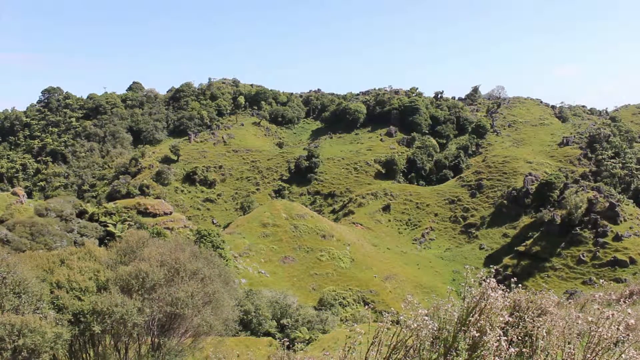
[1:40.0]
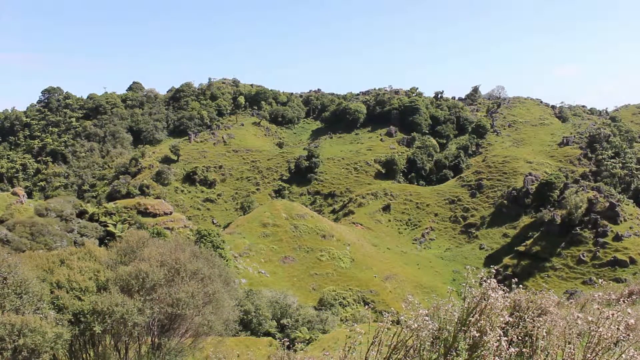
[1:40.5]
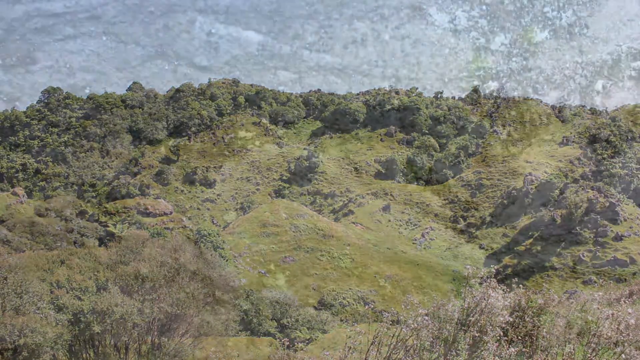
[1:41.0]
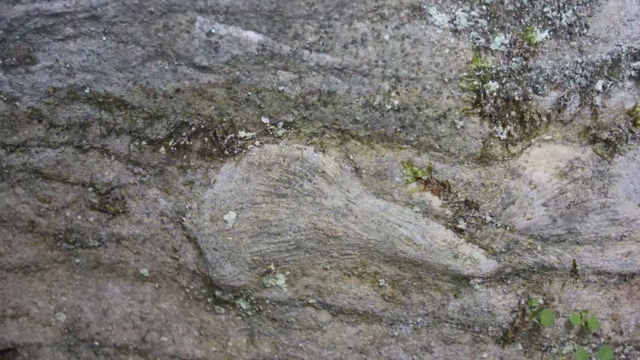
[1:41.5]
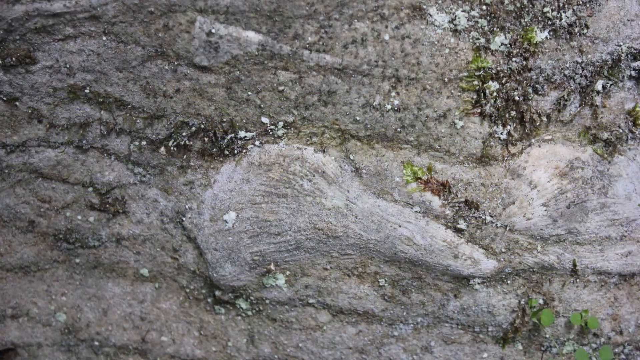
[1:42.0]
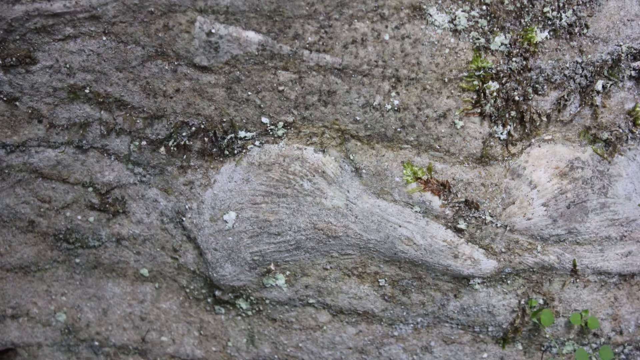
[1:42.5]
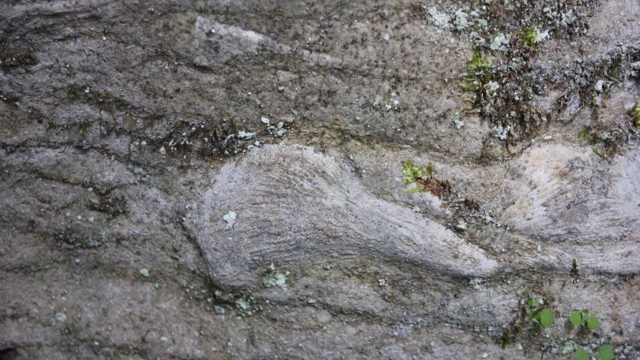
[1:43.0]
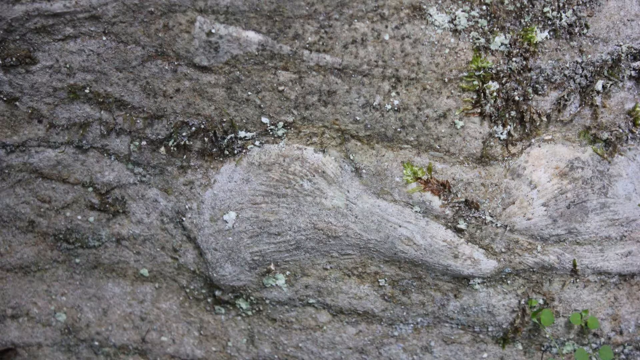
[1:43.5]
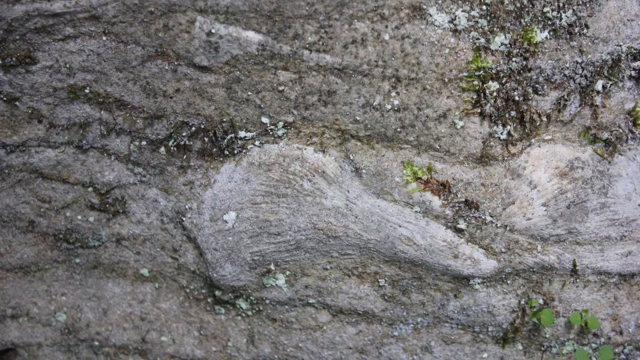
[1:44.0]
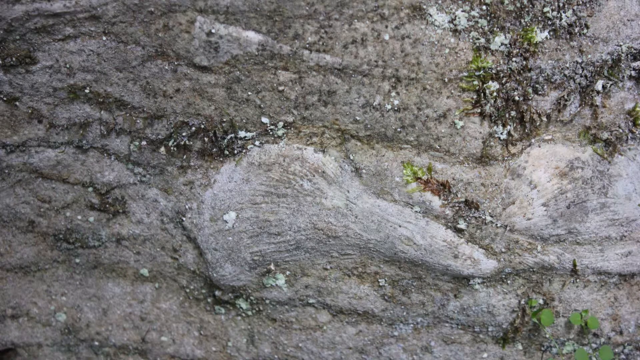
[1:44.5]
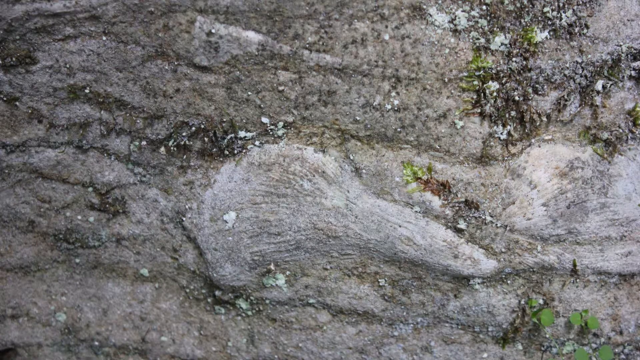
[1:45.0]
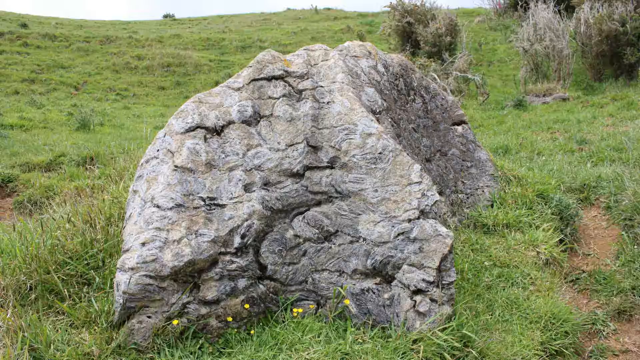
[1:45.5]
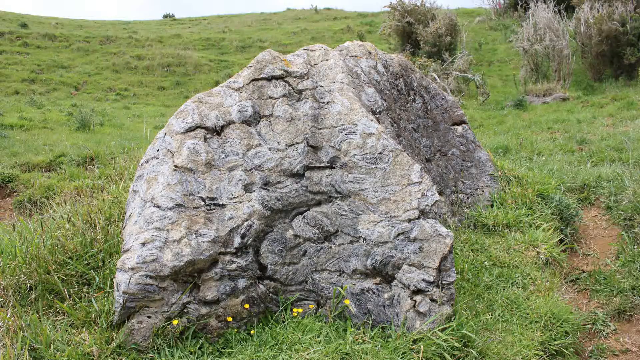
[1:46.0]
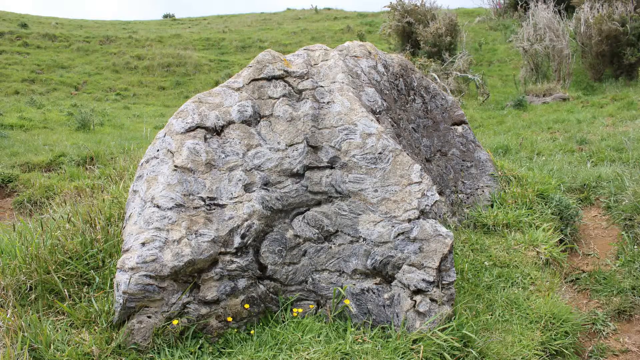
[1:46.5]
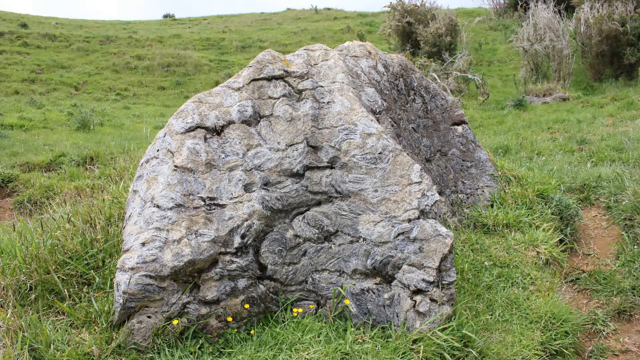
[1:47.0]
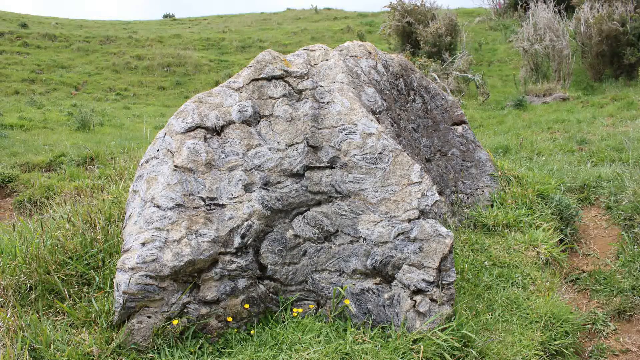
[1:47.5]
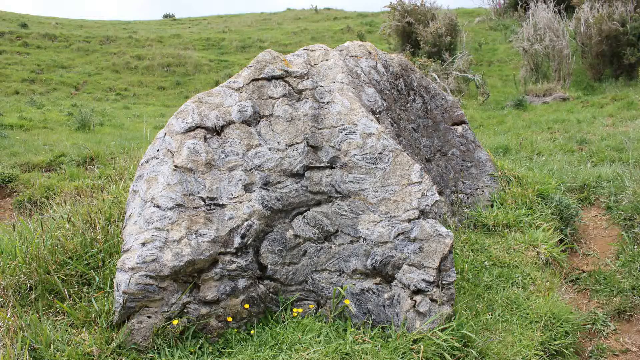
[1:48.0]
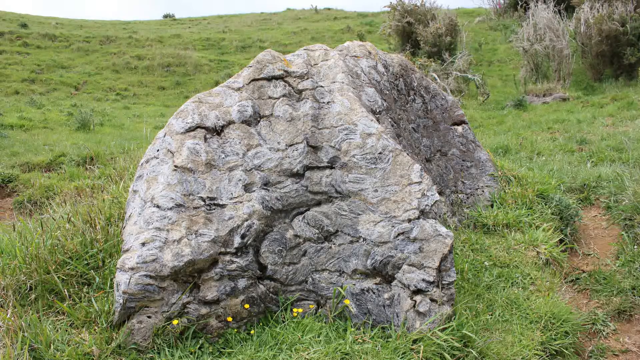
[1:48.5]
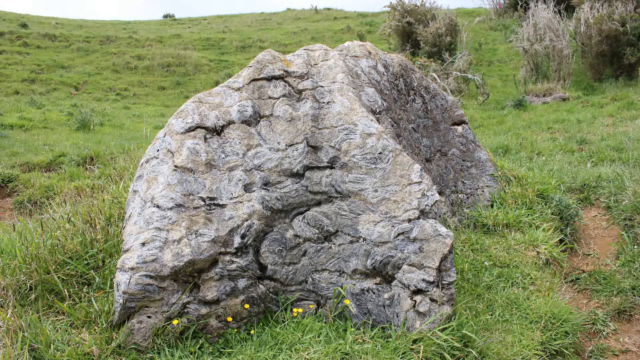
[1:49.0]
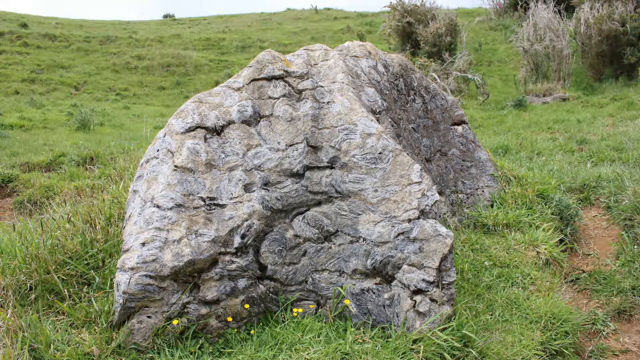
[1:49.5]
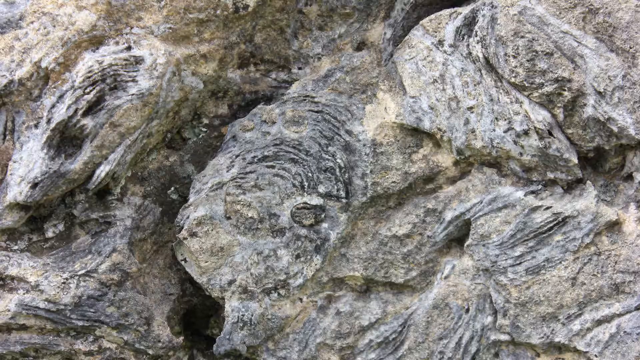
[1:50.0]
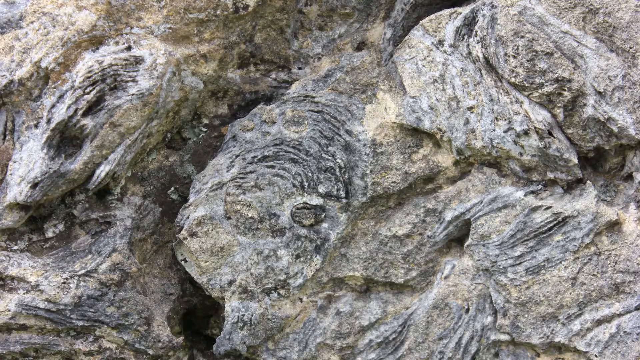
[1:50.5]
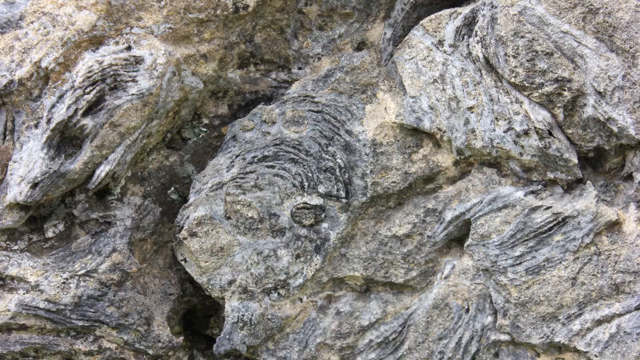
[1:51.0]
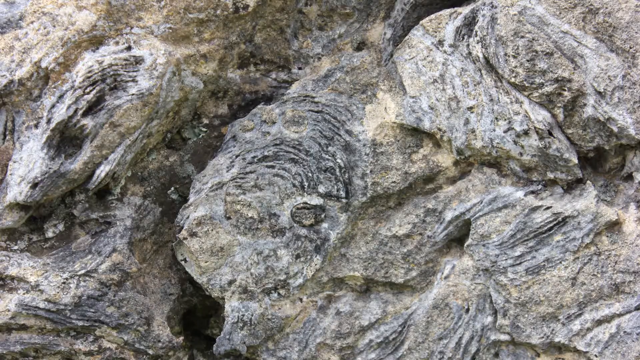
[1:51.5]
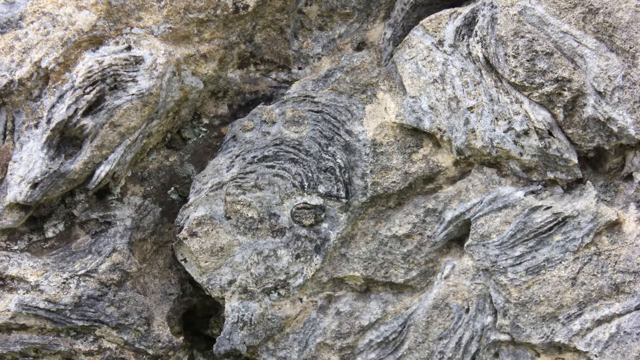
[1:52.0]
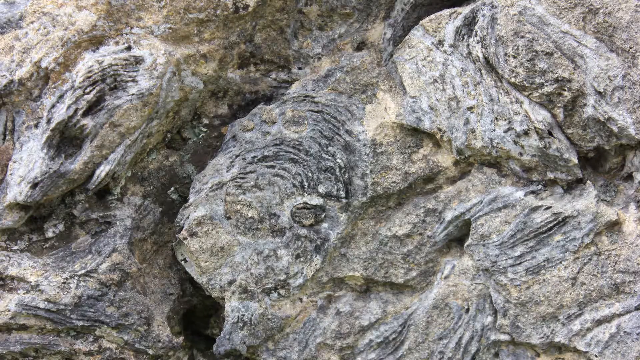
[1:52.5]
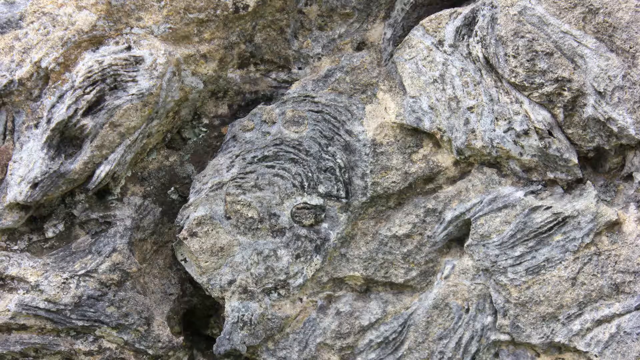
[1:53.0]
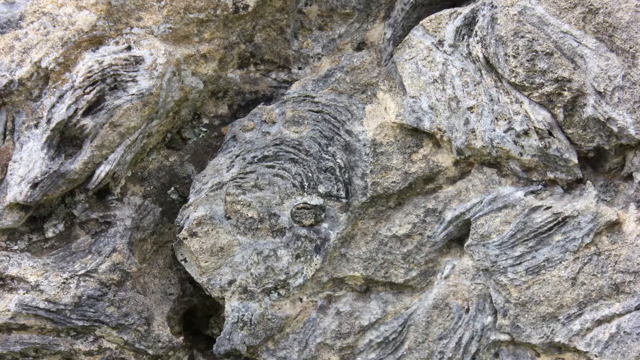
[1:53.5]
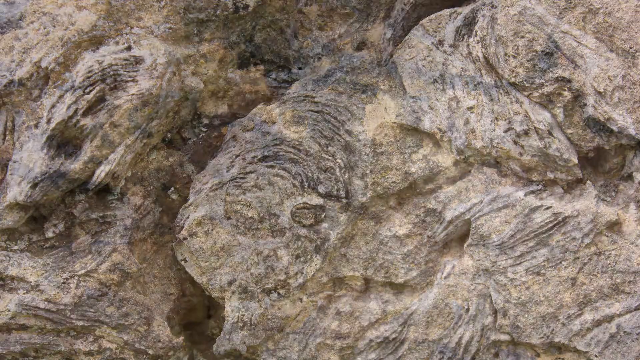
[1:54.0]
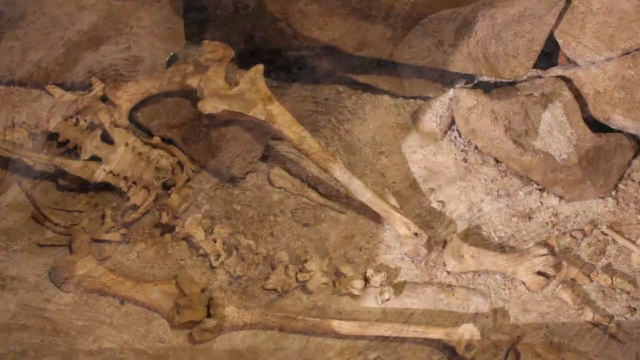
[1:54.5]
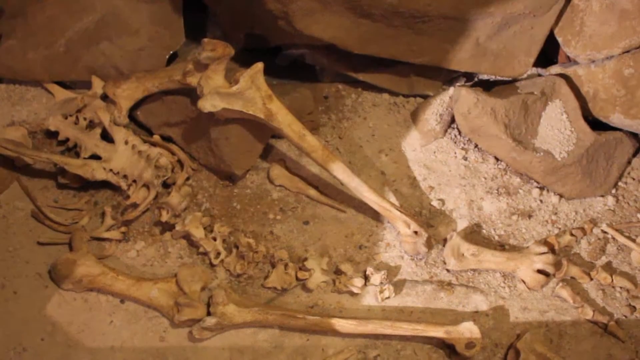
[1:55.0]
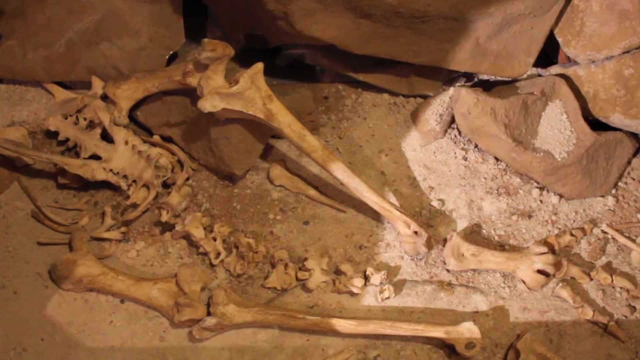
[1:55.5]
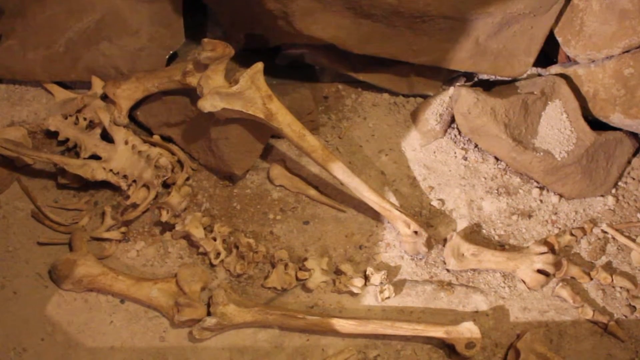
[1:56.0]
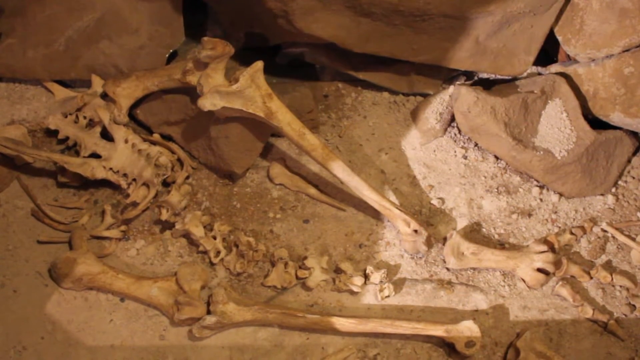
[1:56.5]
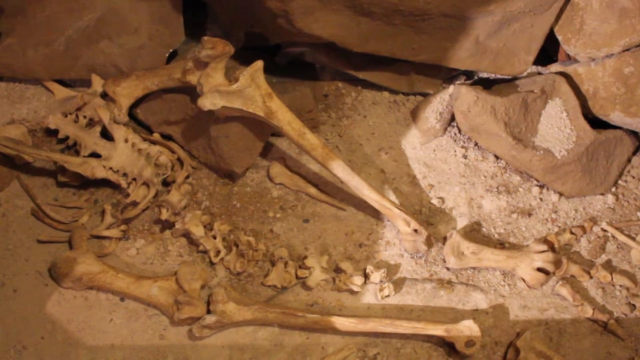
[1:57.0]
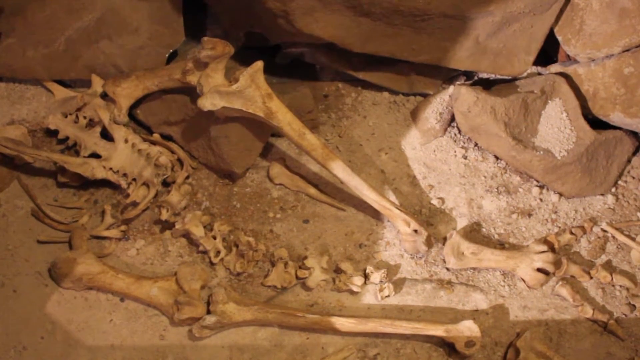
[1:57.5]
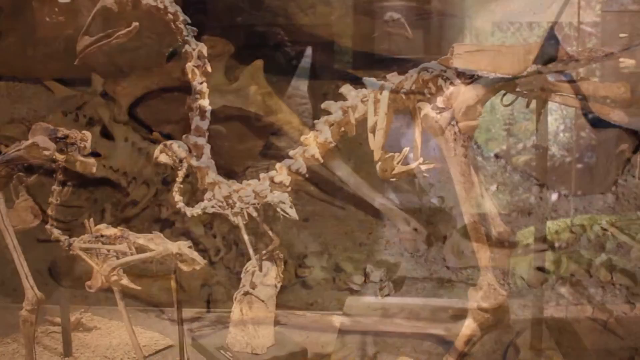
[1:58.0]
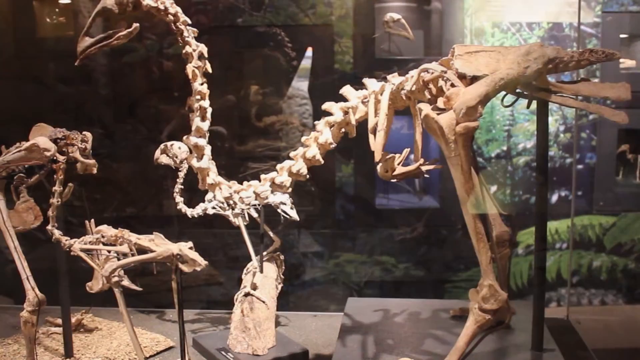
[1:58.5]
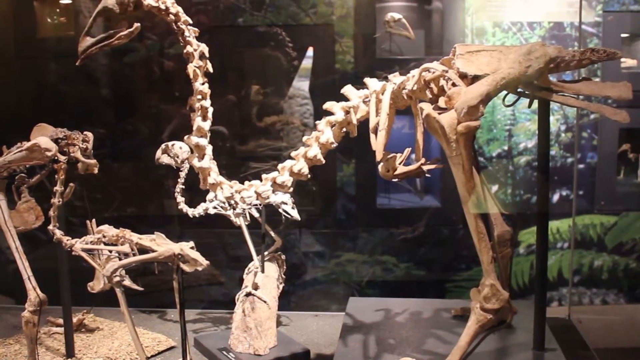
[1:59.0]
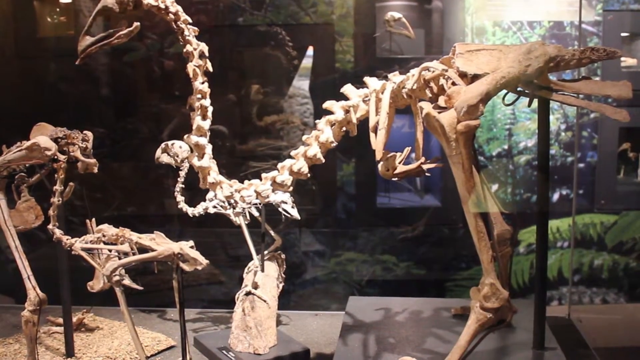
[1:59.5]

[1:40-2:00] Green hills and trees appear, probably a different area of the same caves and nature area. Then a closeup shows what appear to be rocks, with a bit of green moss growing on the right side and some black-looking rocks beside them. In the center there appears to be a white rock growing to the right, shaped like giant teeth or perhaps a vegetable growing sideways. Next is a rock by itself with short grass around it. The rock looks almost scaly, with a mix of white and brown colors, and looks almost like an armored lizard or some sort of dinosaur resting there, but it is just a rock.